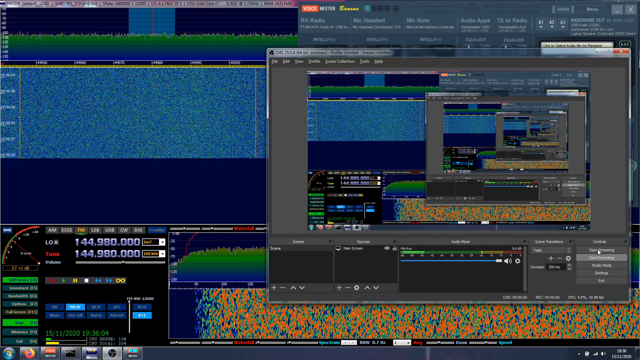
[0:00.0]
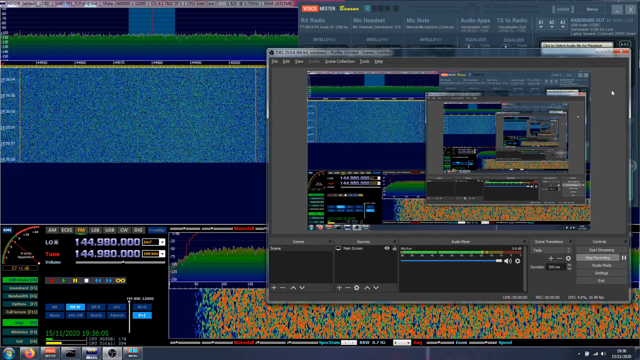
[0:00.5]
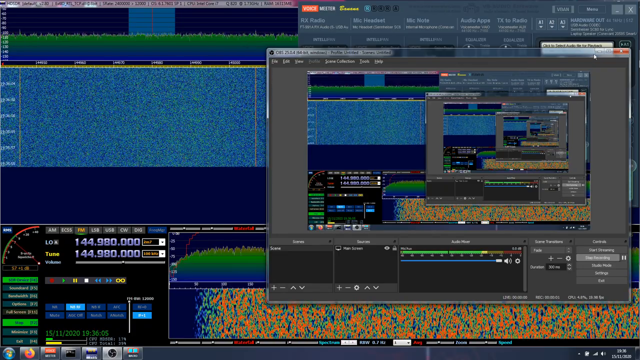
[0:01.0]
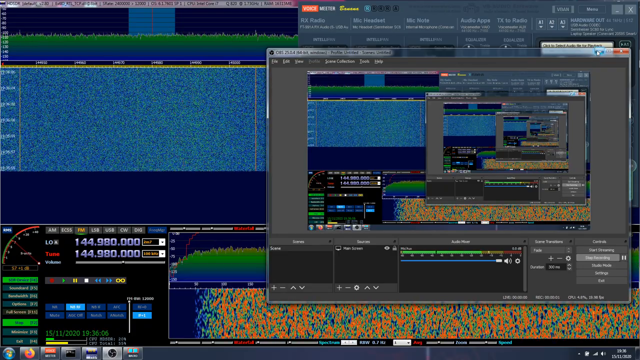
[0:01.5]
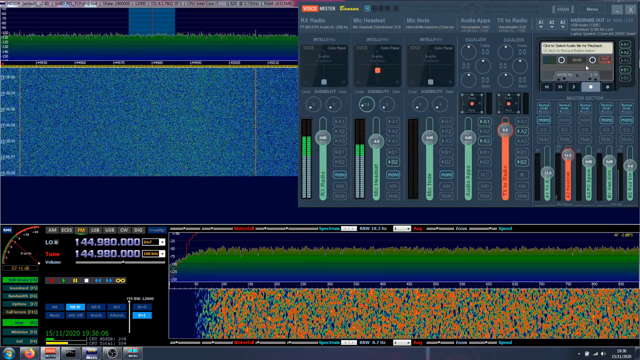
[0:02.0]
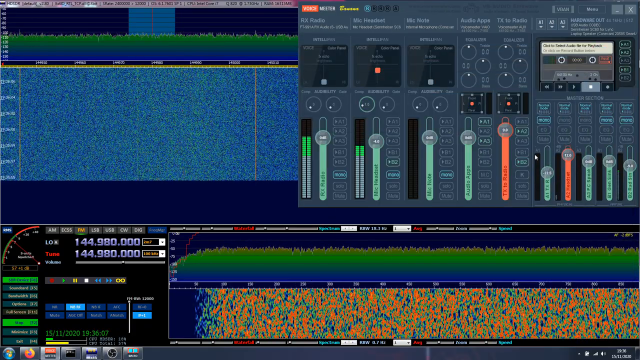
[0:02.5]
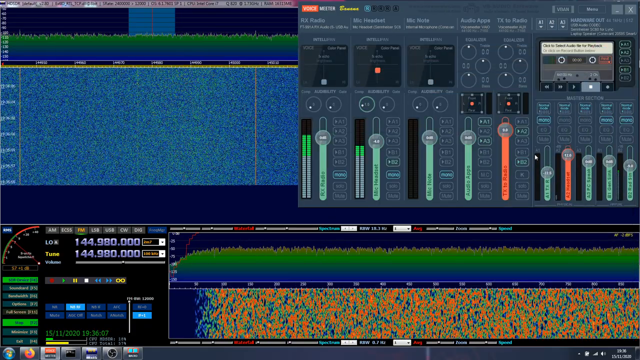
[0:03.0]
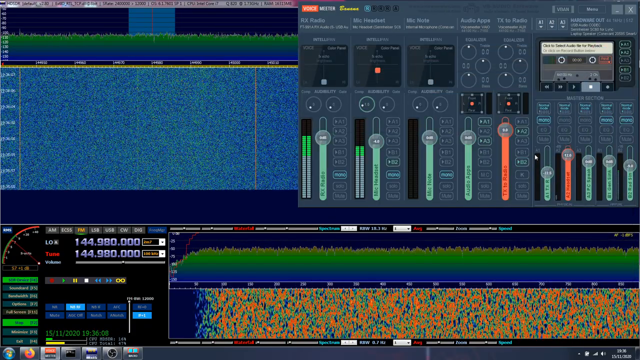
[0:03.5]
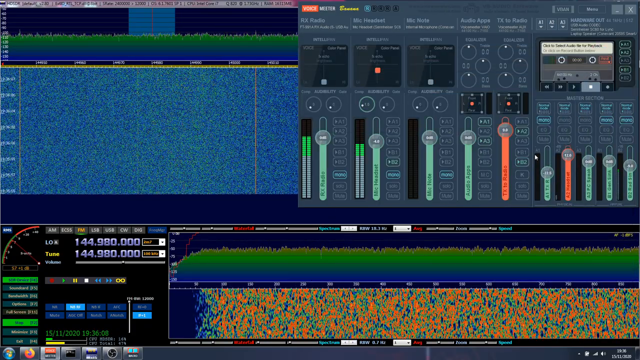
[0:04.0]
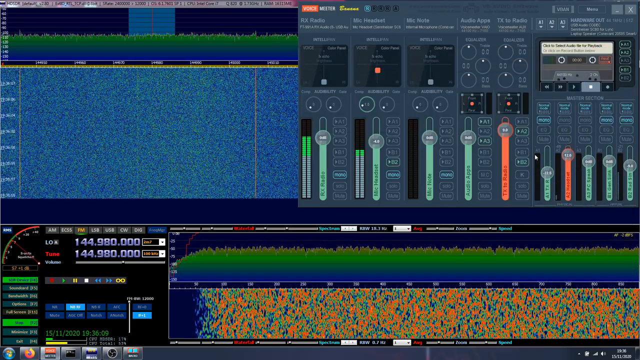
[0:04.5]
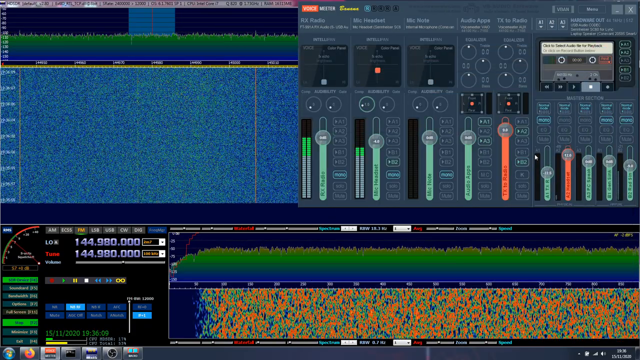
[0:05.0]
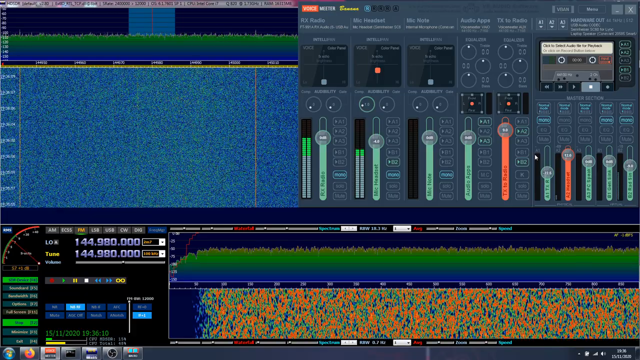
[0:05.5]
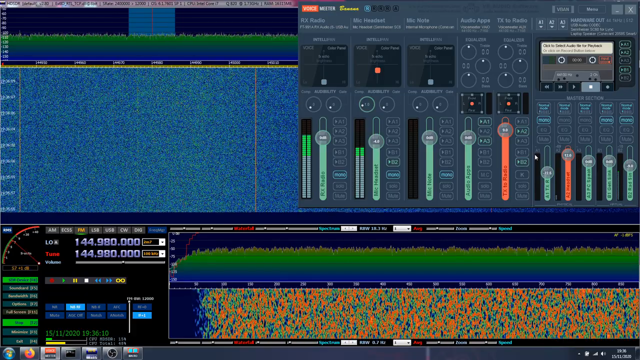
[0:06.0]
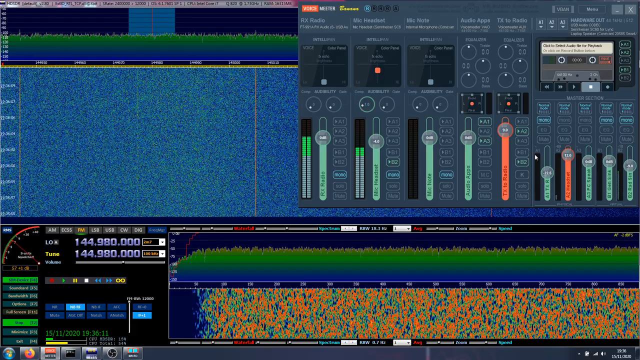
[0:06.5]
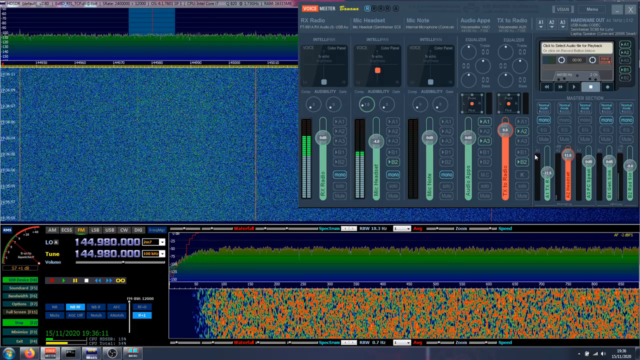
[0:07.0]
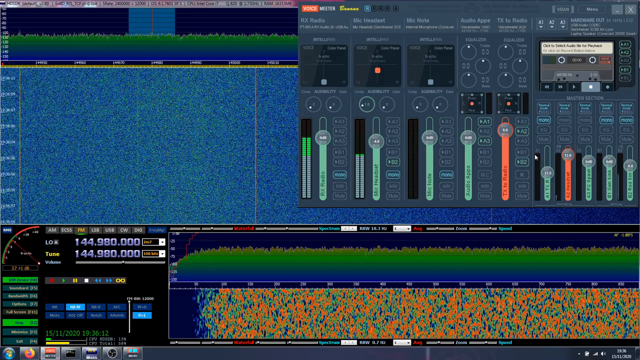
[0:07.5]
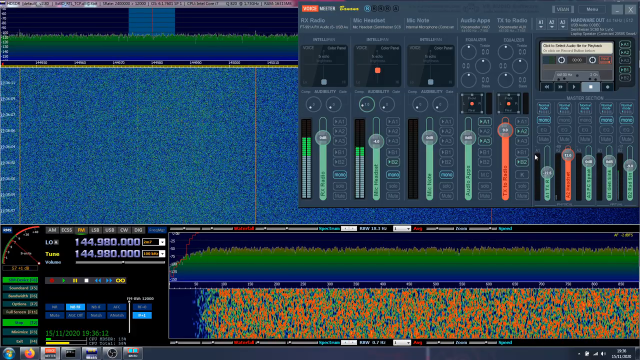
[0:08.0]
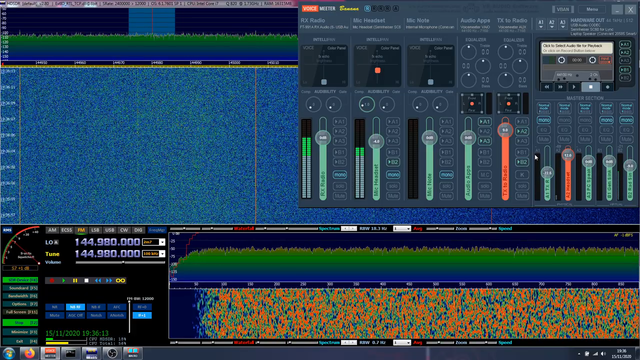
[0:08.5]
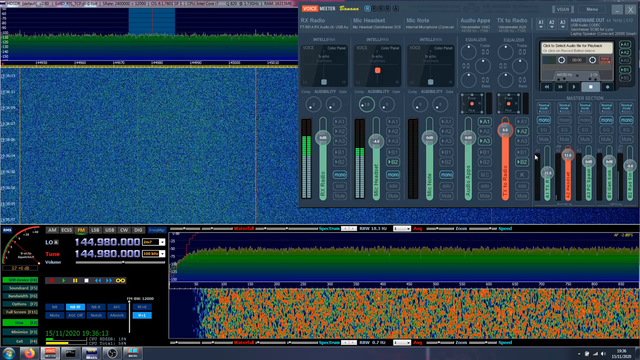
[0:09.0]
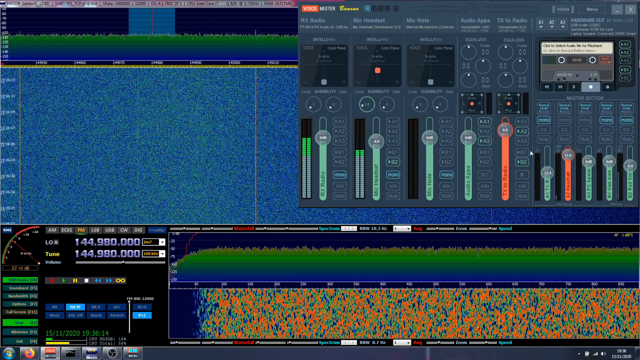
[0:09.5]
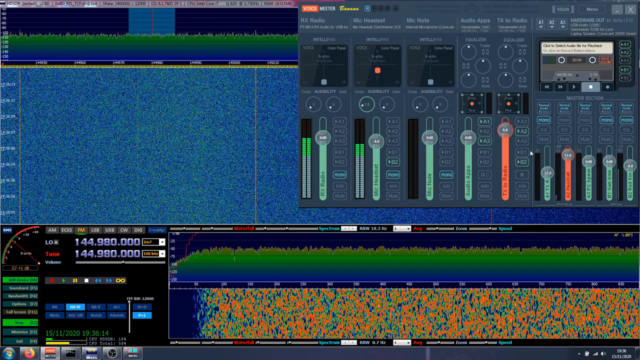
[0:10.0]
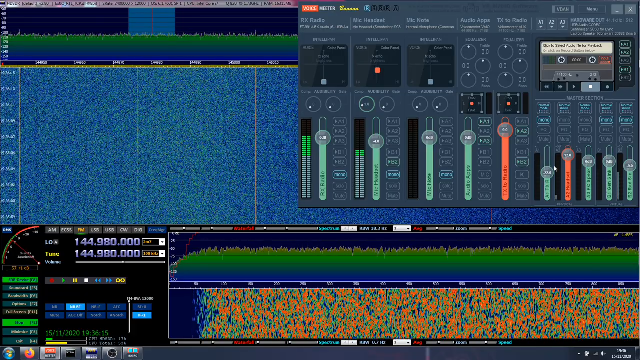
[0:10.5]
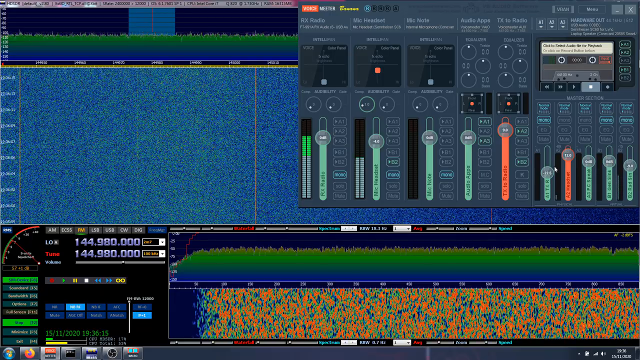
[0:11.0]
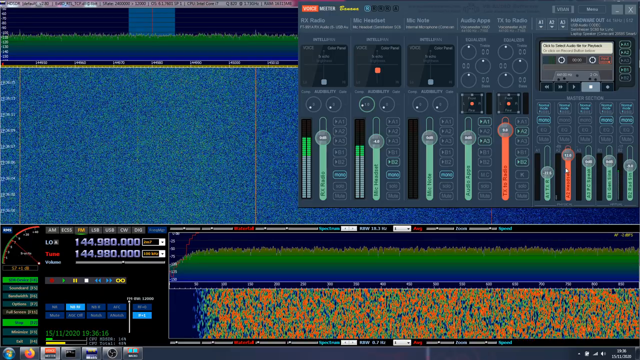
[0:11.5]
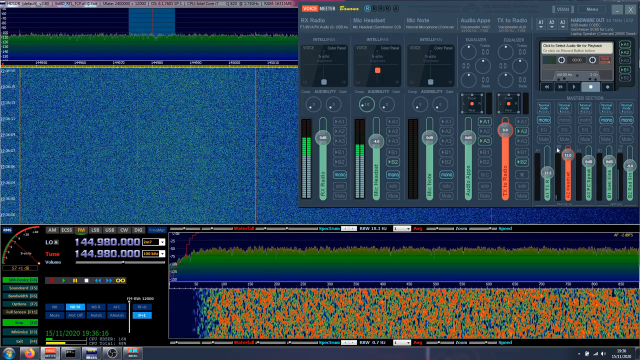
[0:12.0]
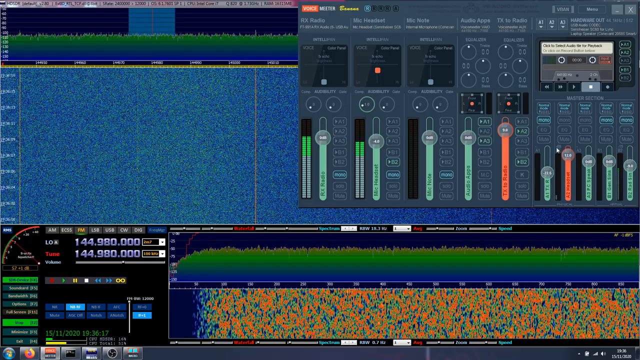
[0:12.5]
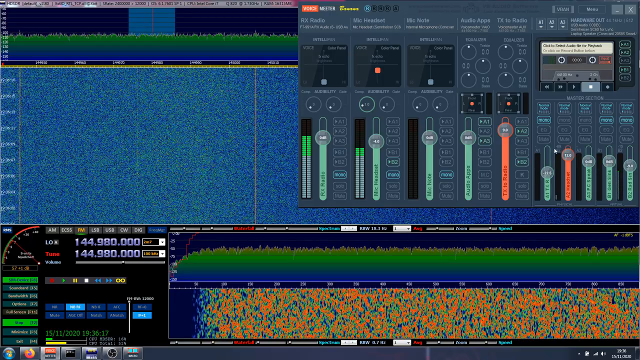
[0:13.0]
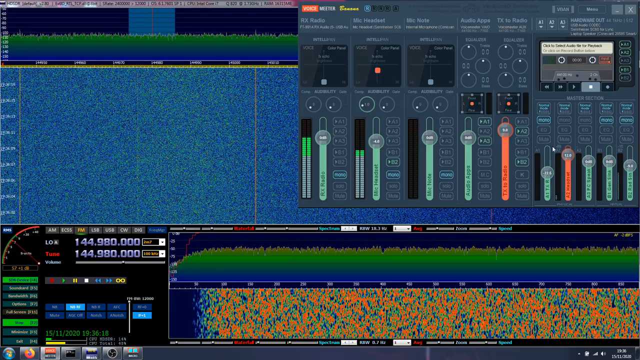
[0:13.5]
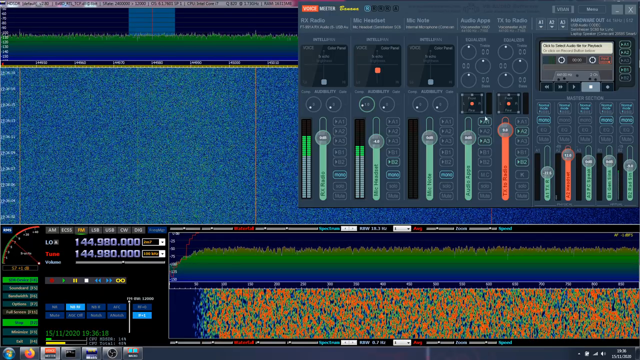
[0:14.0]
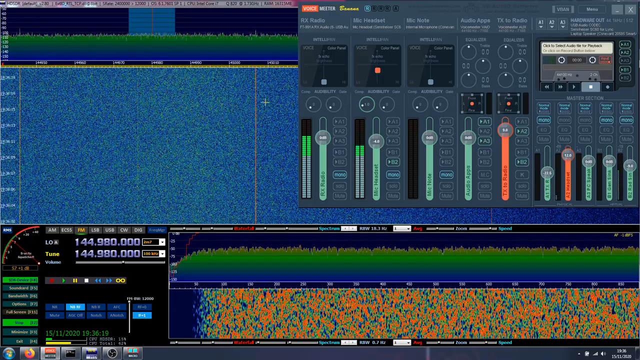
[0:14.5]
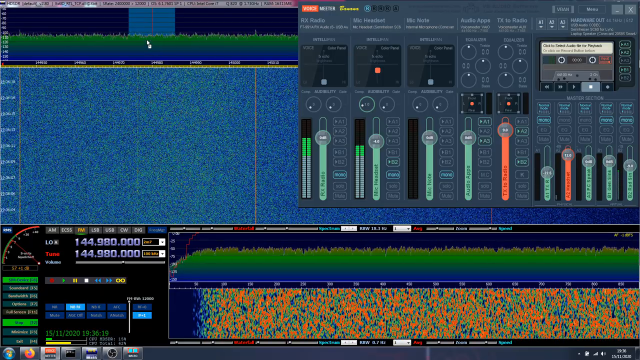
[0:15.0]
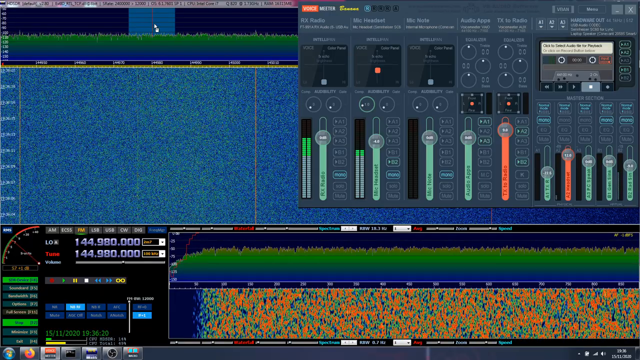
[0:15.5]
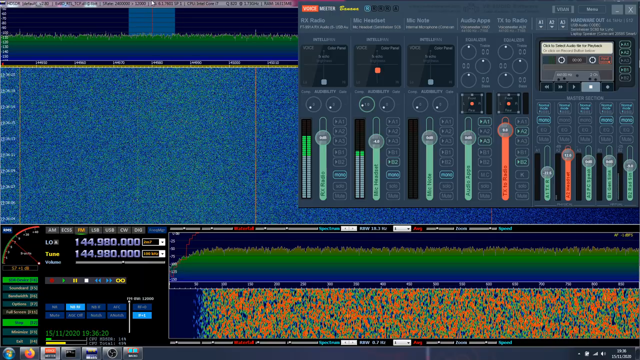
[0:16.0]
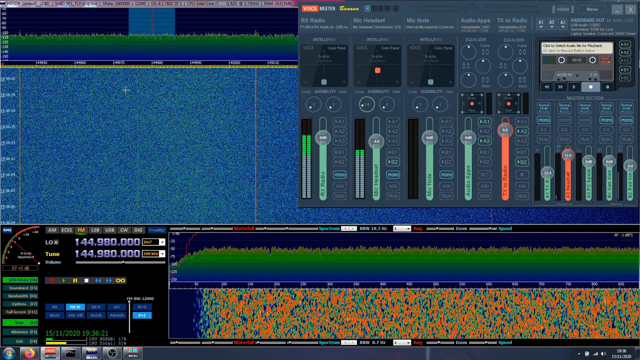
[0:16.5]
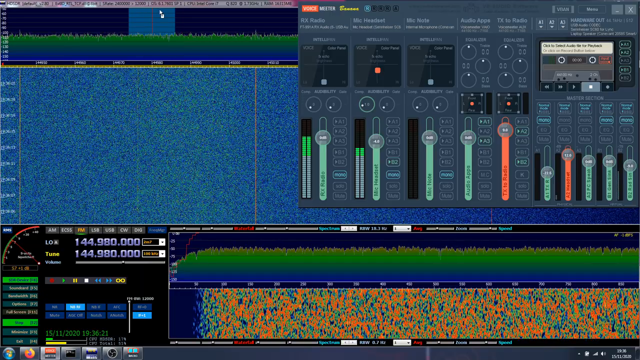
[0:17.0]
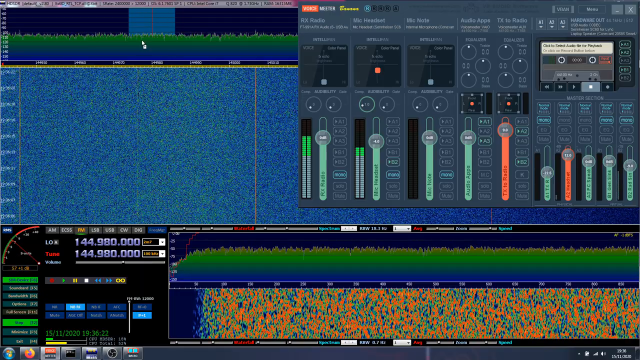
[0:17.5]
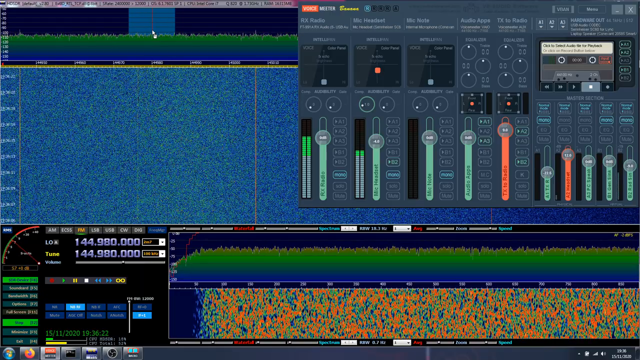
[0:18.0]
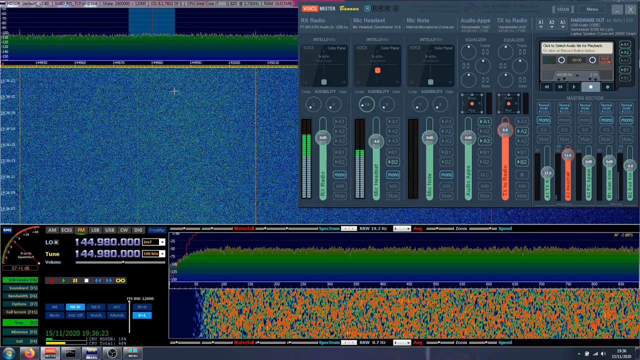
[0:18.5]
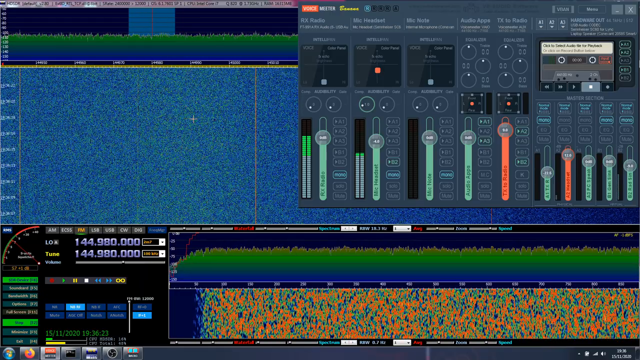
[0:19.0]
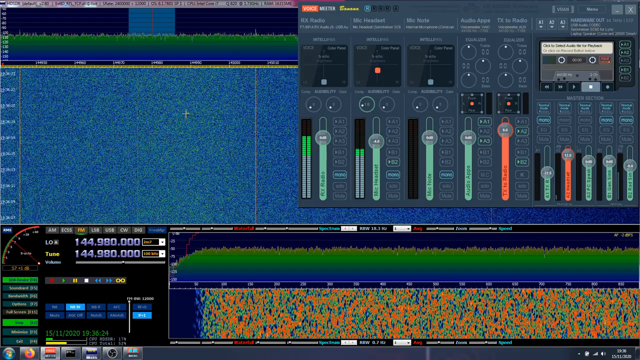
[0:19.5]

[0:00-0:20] What appears to be audio production software is on screen, apparently running on a Windows computer, judging by the Windows controls and menu bars. The software is unidentified, but a mixer is visible. One window has a blue, staticky region whose meaning is unclear; it may possibly be a white noise or noise recording. Toward the top left of the screen, a long horizontal window is open and seems to show a green rendering of an audio track, which looks like constant noise rather than music.